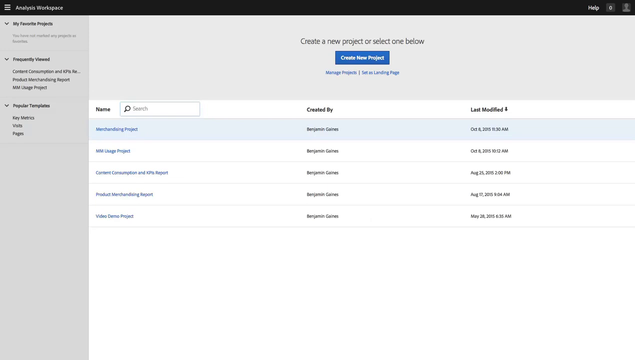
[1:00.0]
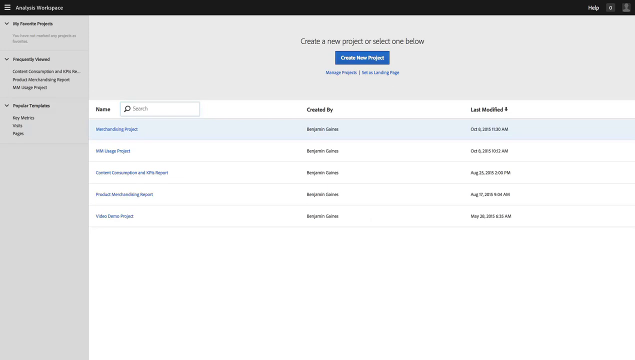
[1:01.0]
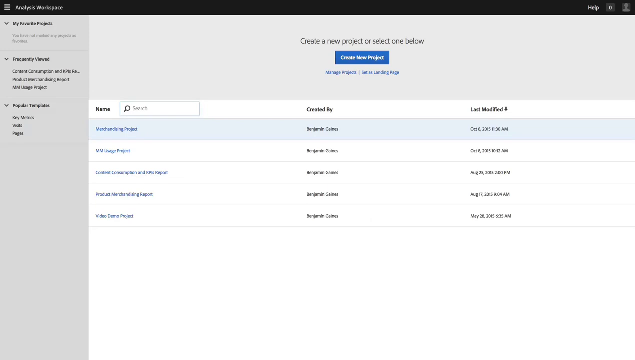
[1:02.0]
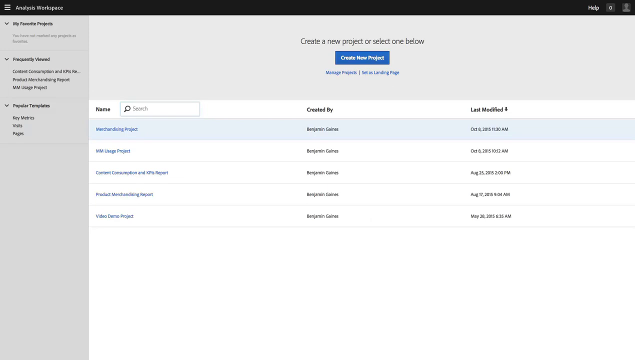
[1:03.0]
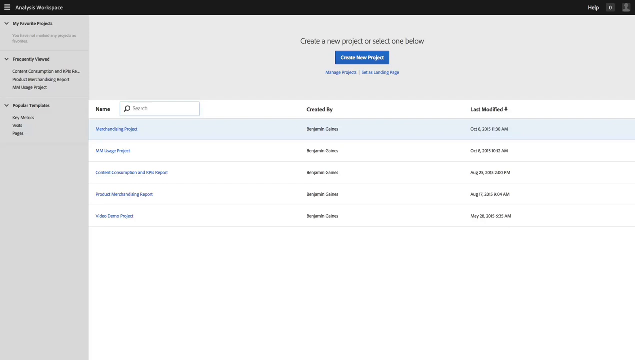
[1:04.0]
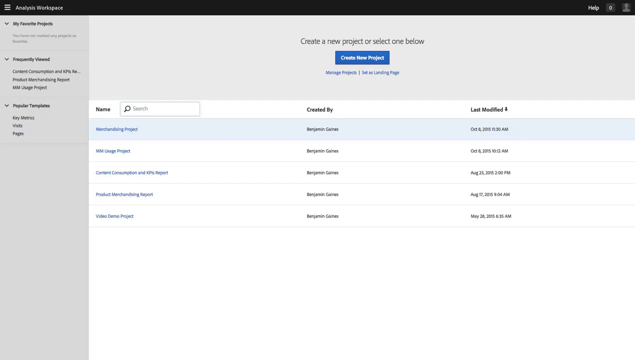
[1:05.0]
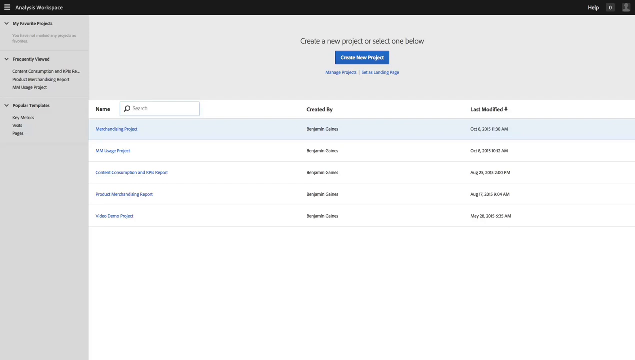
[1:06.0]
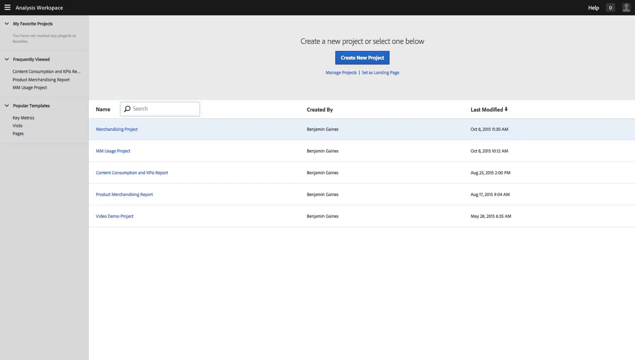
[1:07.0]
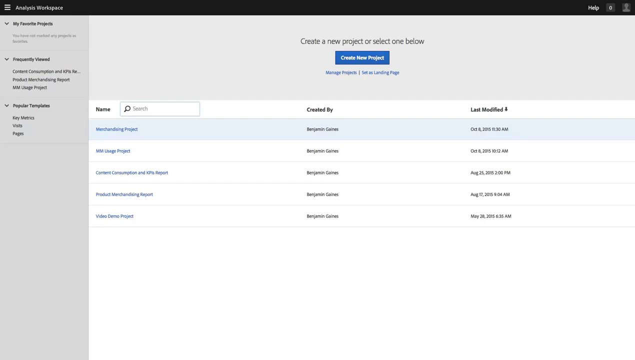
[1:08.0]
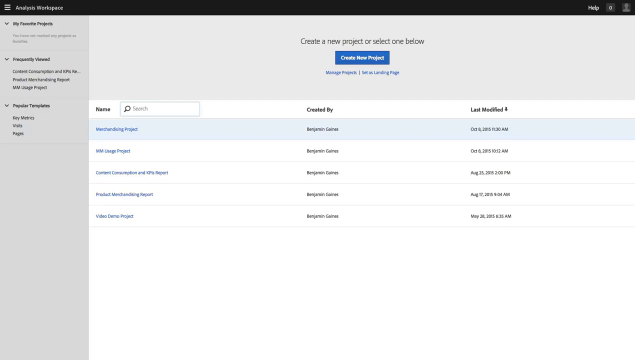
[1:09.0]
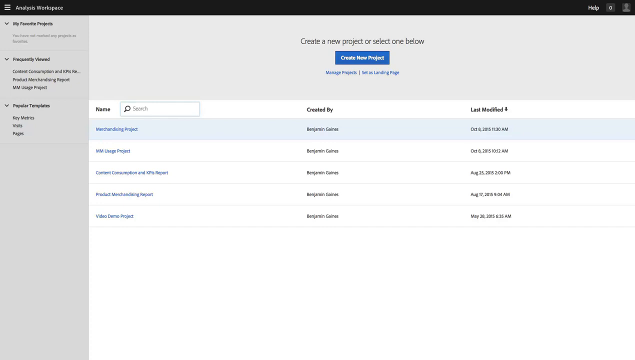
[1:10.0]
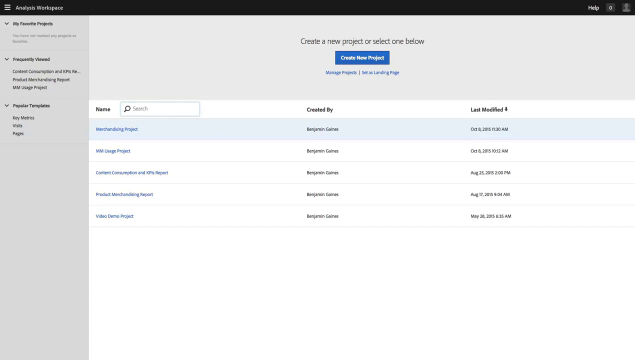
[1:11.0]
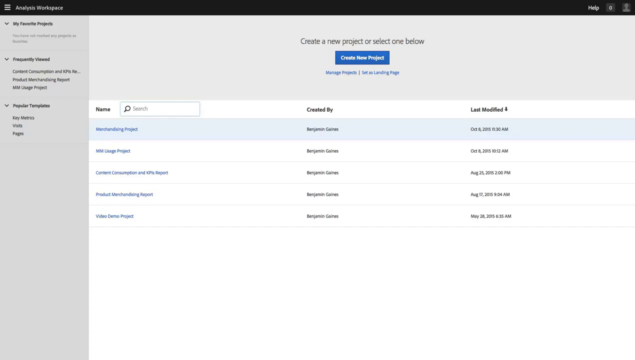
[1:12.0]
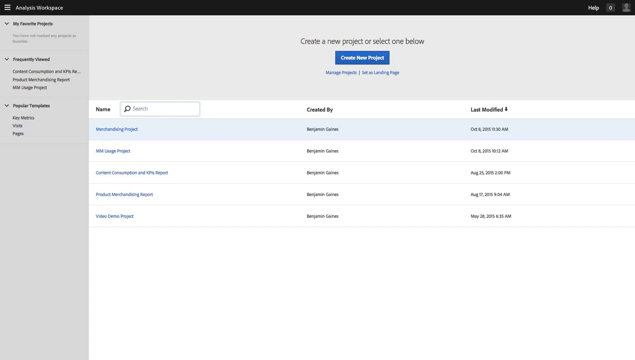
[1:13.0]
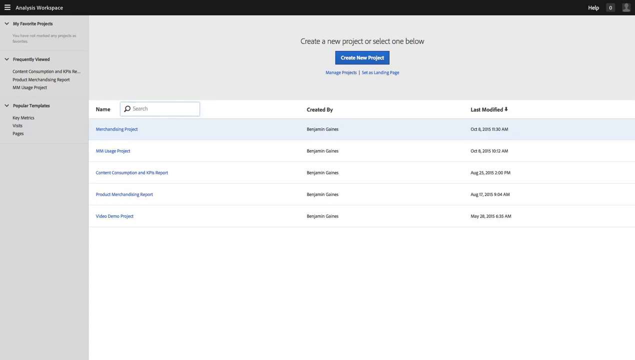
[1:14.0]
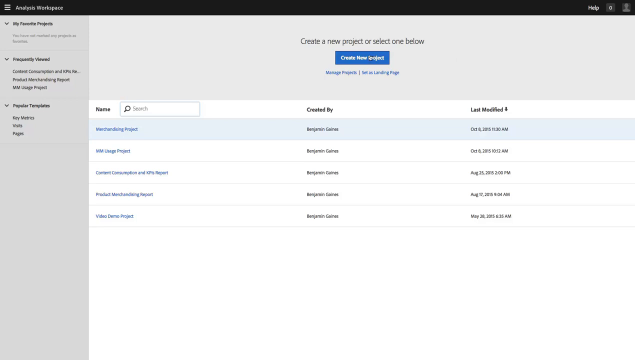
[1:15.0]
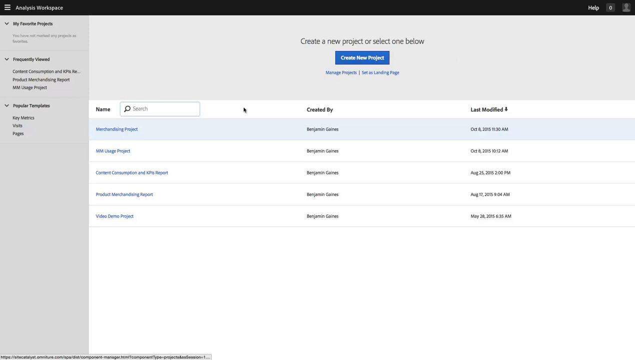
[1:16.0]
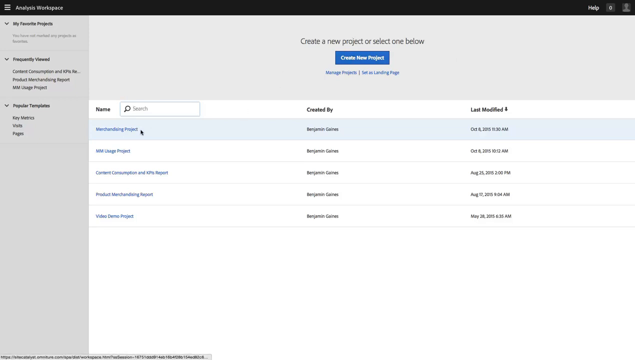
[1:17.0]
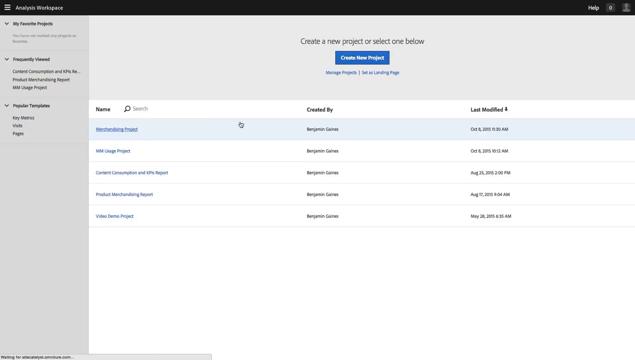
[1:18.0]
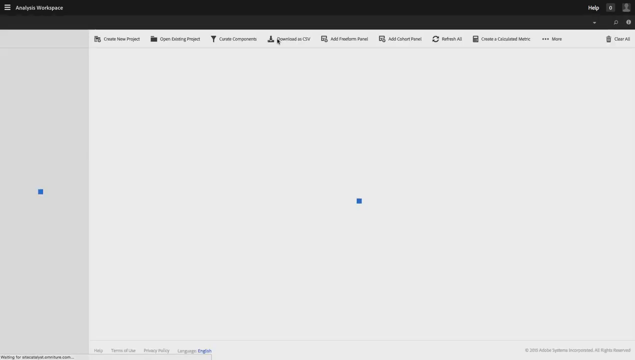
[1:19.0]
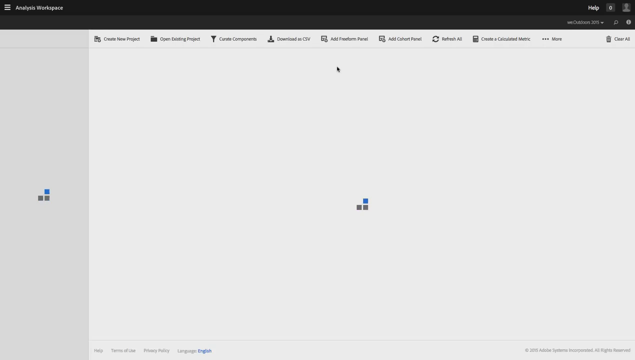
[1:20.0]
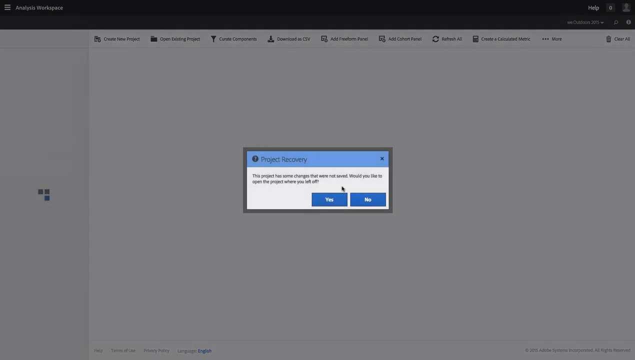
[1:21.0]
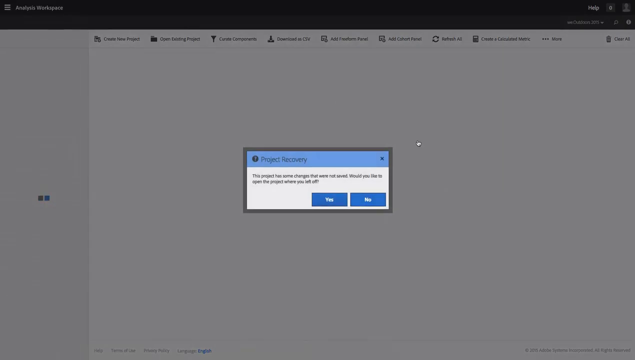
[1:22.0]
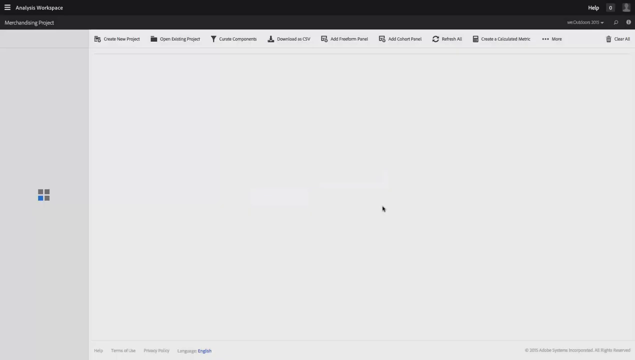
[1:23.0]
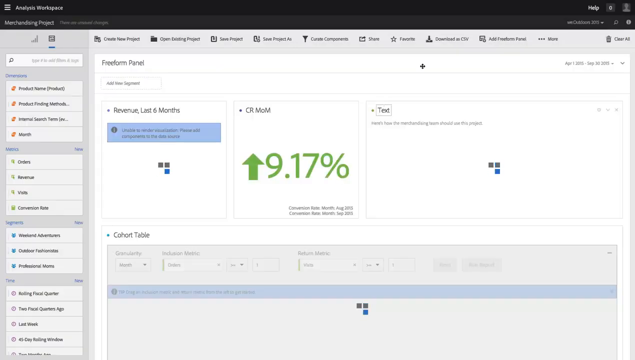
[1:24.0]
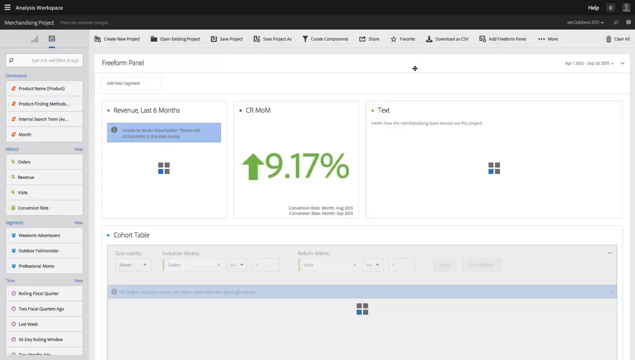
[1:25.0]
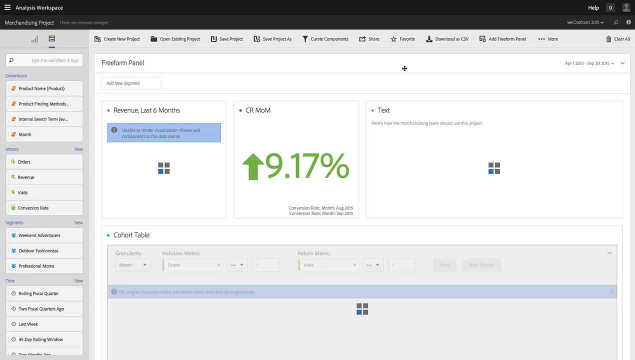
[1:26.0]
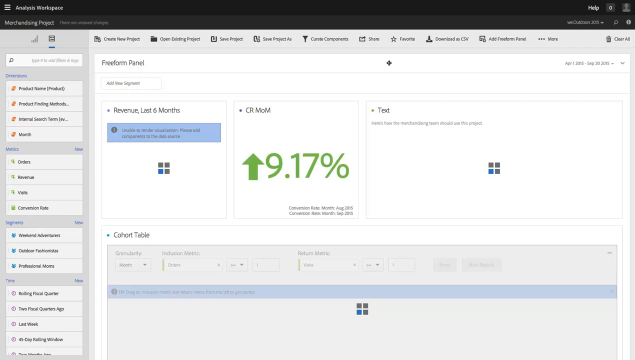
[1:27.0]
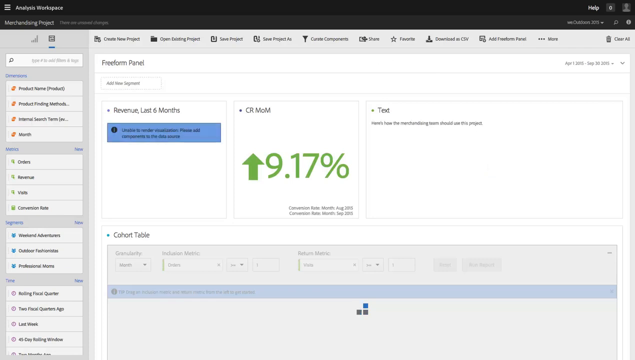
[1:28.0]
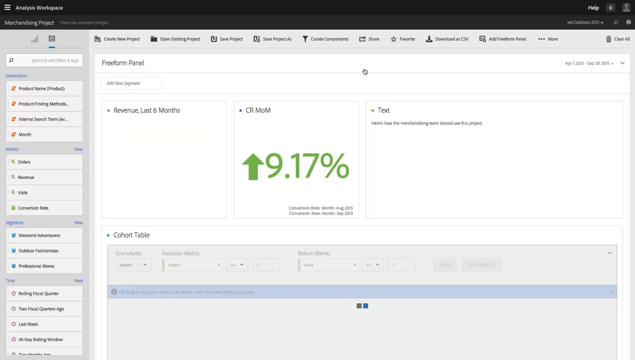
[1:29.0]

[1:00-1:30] The Analysis Workplace screen with the list of five projects remains on screen, and the text cursor is still blinking in the search bar above the project names. The mouse pointer is not visible for about the first 14 seconds, then suddenly appears at the upper right next to the new project button area. It hovers over that button for a moment, briefly moves down and to the left to the third project name on the list, goes back up to the project button, then seems to hover over the first project at the top of the list and apparently clicks on it. The screen starts loading, and a window titled "Project Recovery" appears, like a prompt with a question and a yes or no option; the pointer seems to click no. A new screen titled "Freeform Panel" appears, showing headings such as "Revenue Last 6 Months," "CR MOM," and "Text."